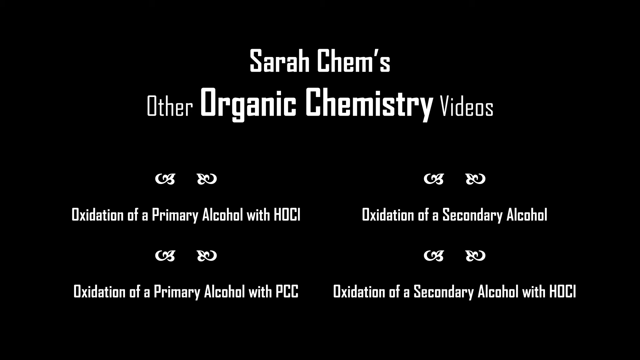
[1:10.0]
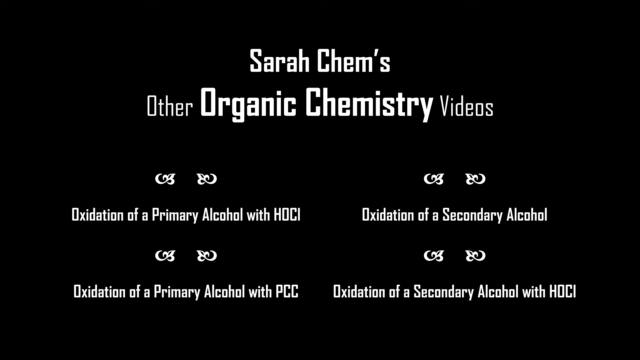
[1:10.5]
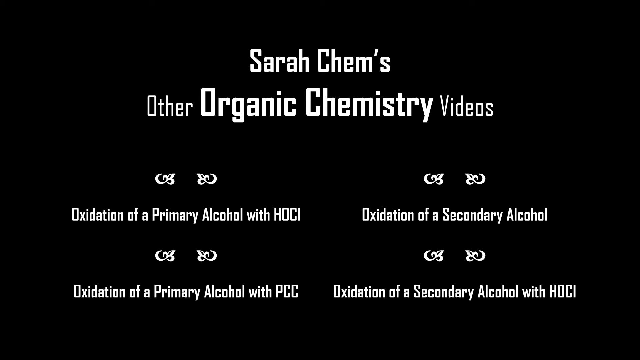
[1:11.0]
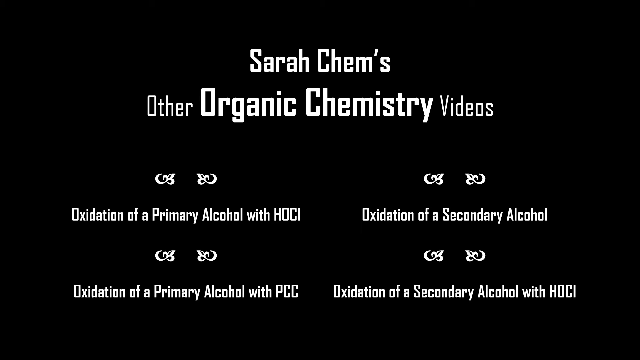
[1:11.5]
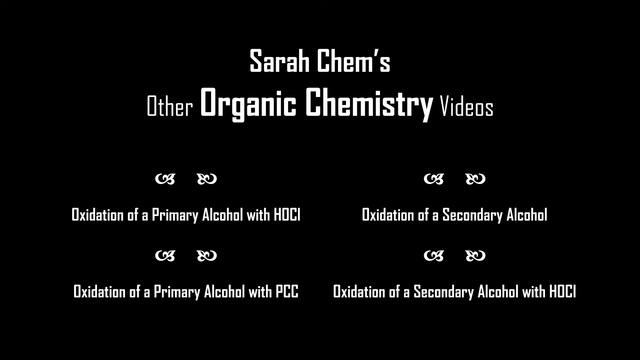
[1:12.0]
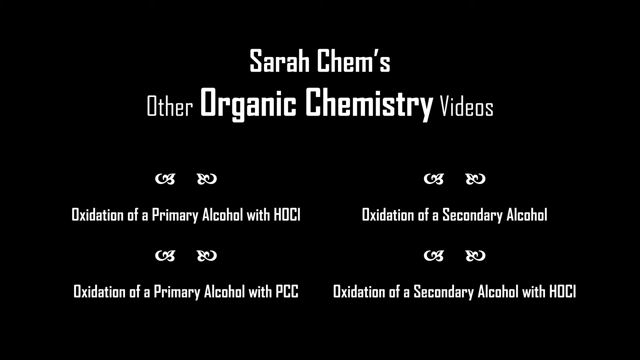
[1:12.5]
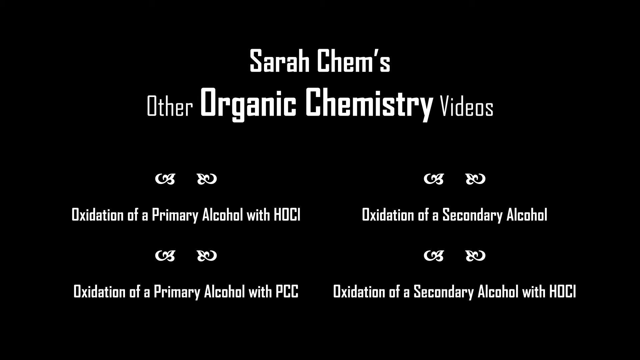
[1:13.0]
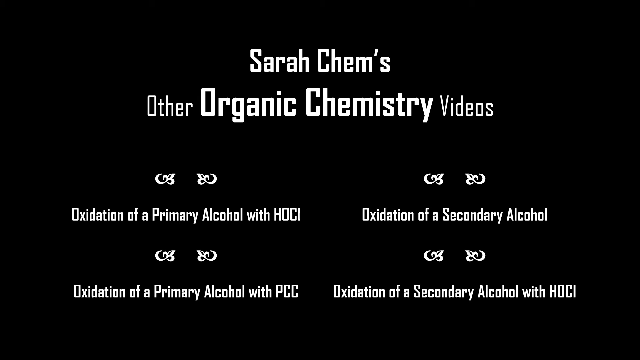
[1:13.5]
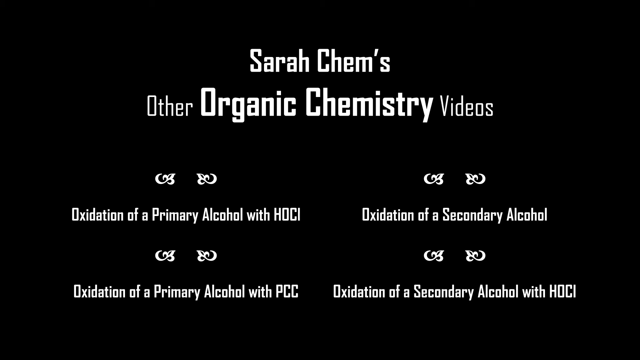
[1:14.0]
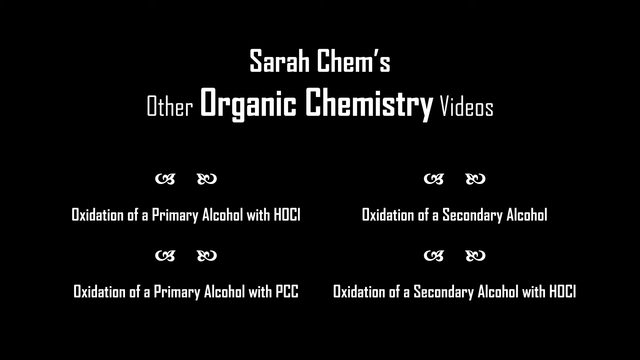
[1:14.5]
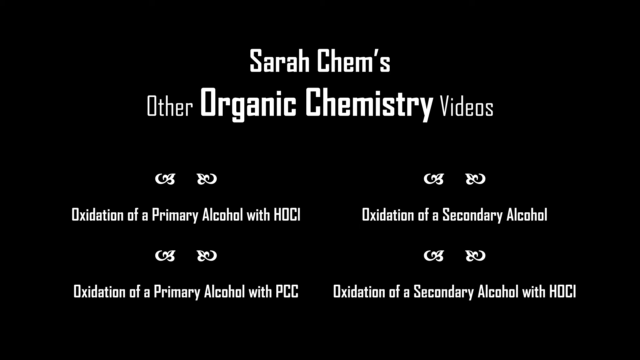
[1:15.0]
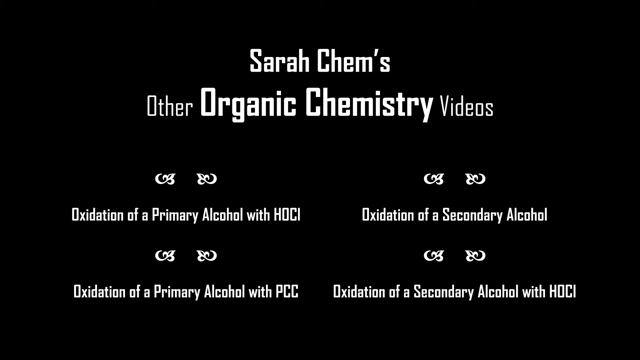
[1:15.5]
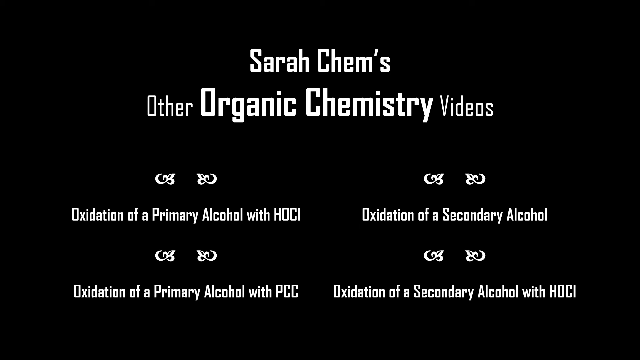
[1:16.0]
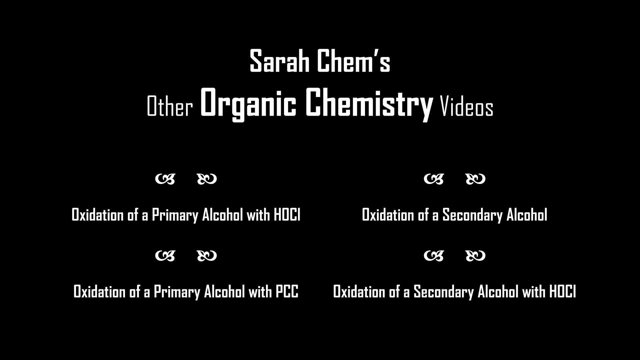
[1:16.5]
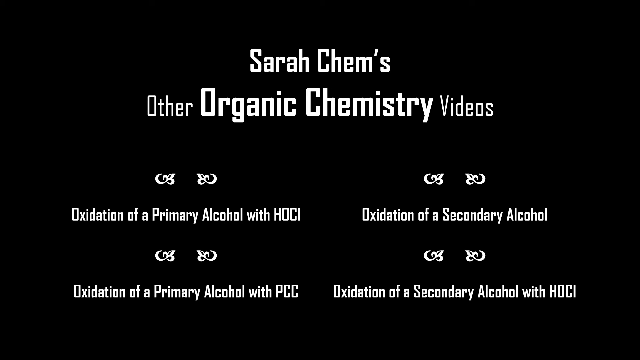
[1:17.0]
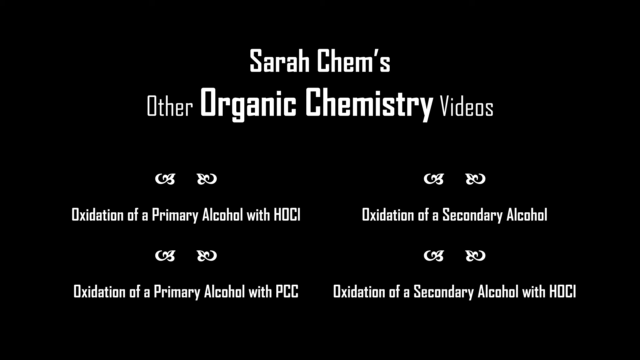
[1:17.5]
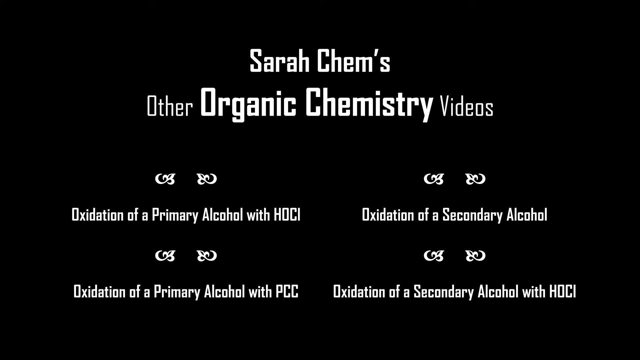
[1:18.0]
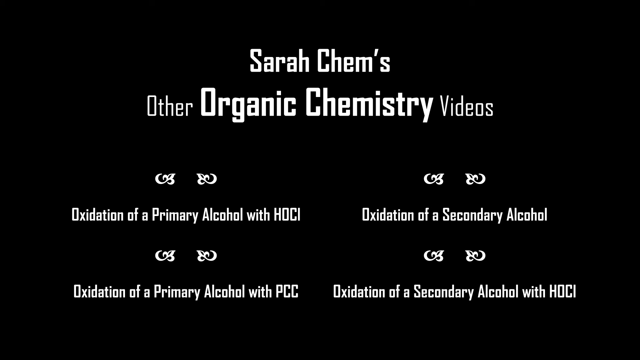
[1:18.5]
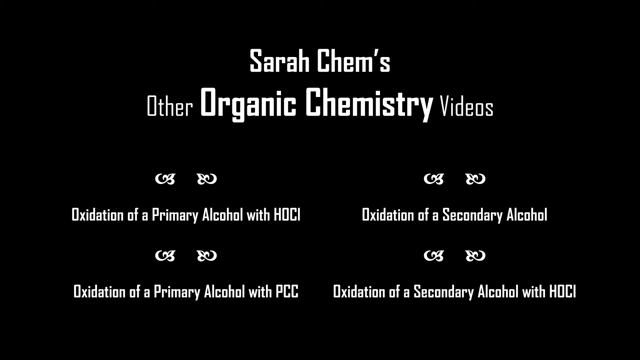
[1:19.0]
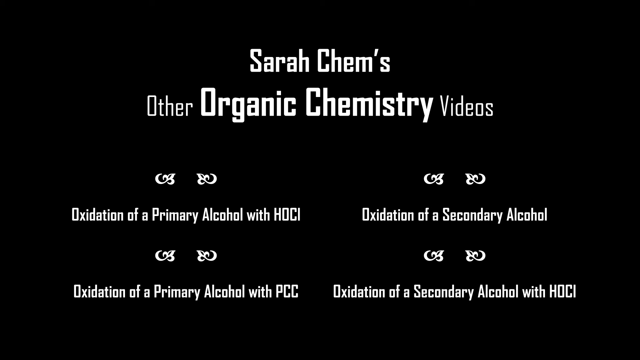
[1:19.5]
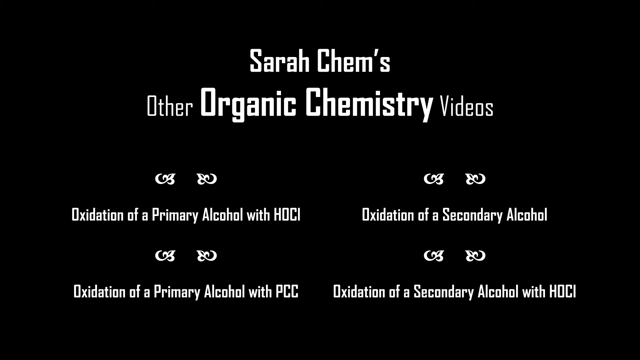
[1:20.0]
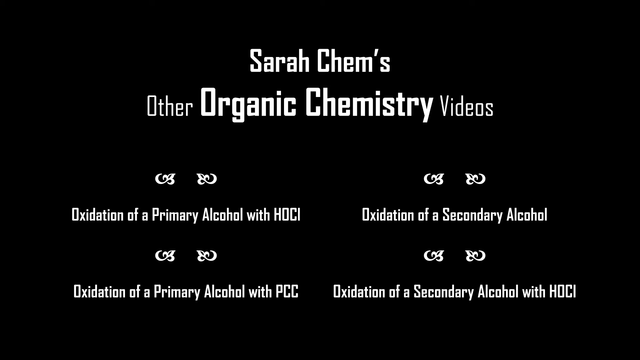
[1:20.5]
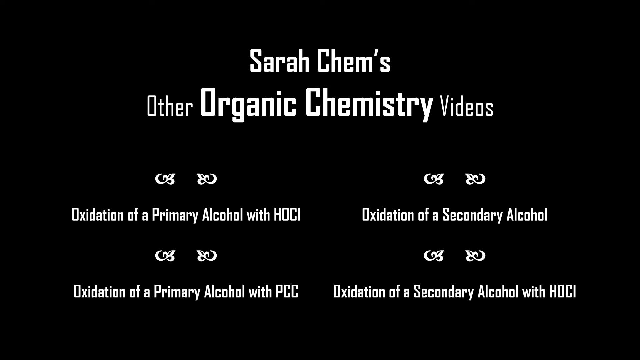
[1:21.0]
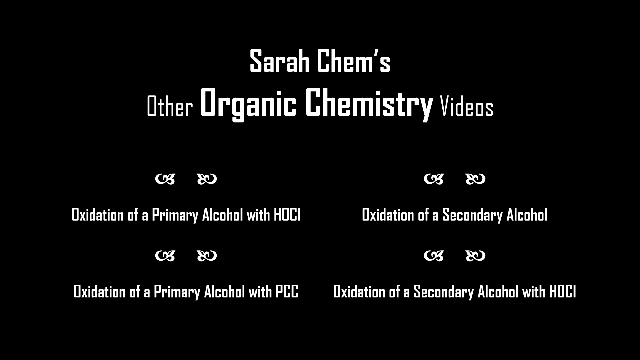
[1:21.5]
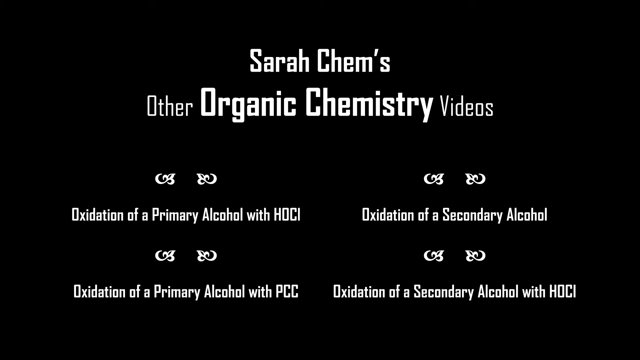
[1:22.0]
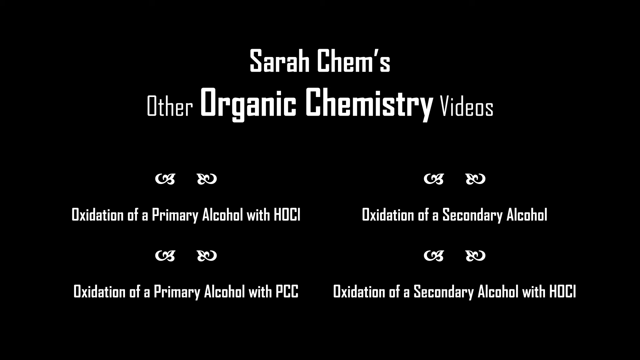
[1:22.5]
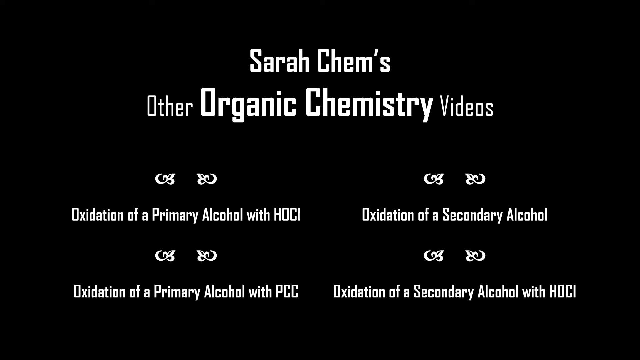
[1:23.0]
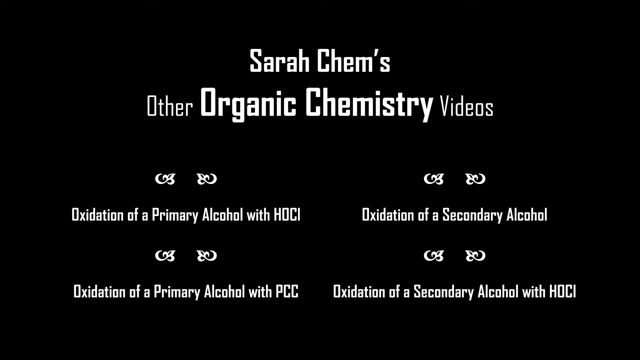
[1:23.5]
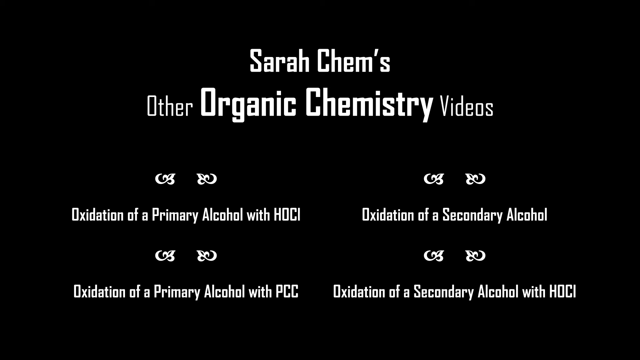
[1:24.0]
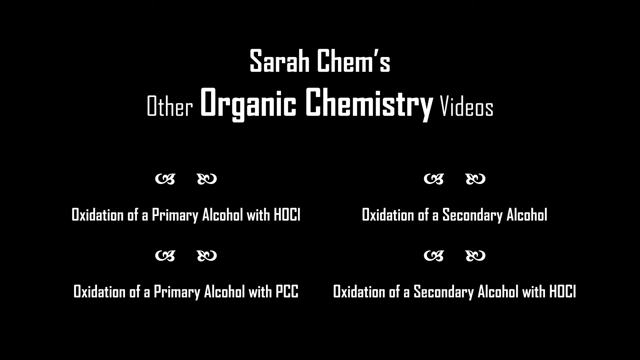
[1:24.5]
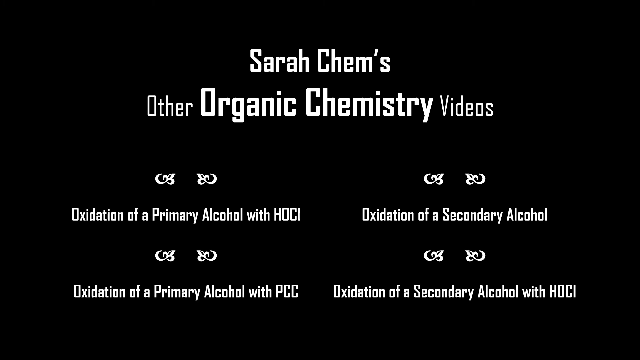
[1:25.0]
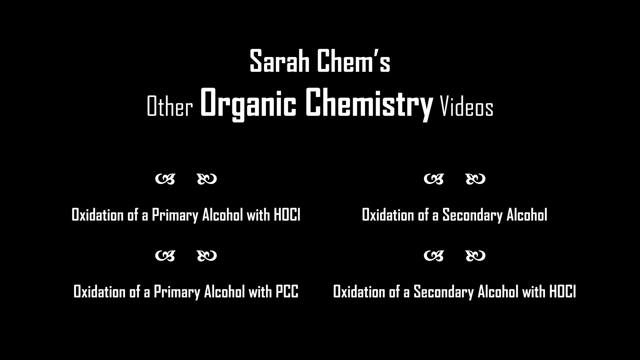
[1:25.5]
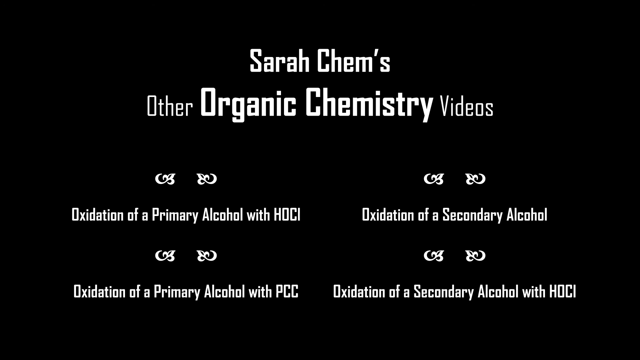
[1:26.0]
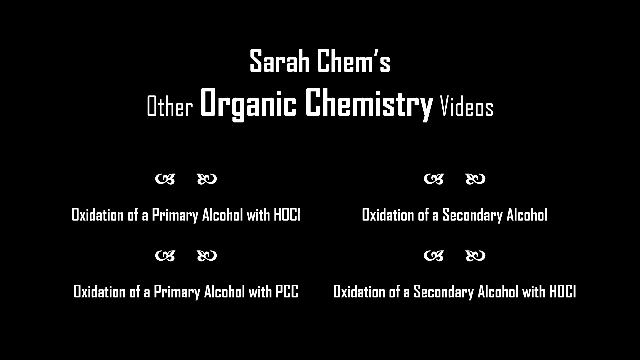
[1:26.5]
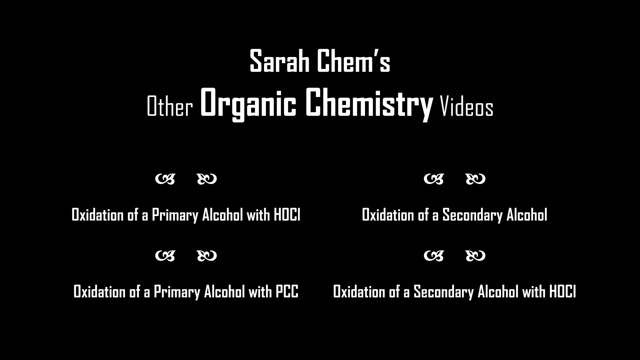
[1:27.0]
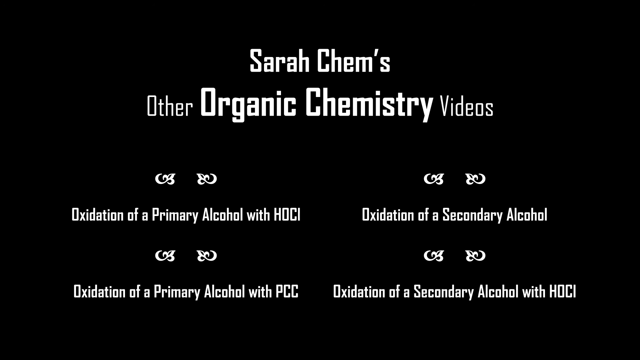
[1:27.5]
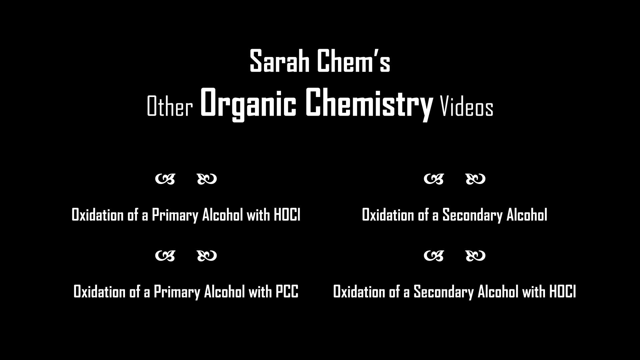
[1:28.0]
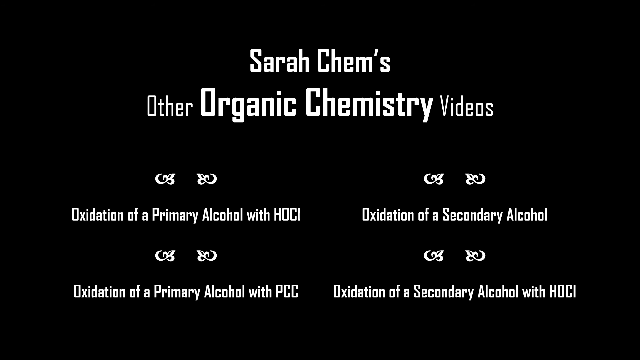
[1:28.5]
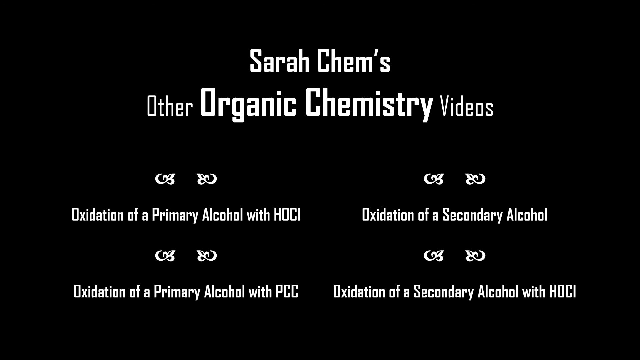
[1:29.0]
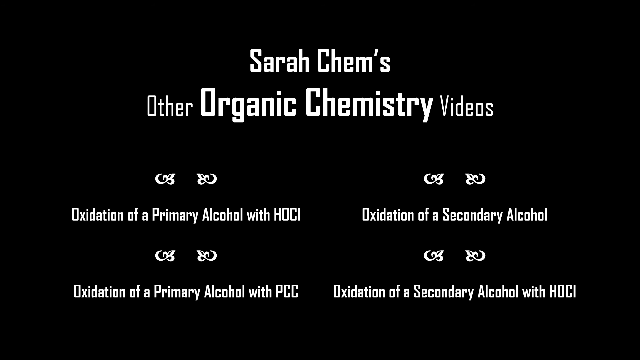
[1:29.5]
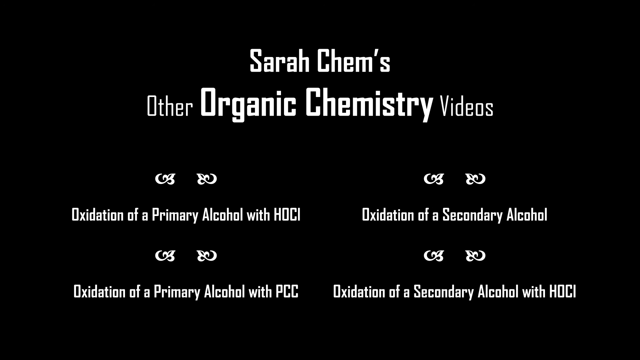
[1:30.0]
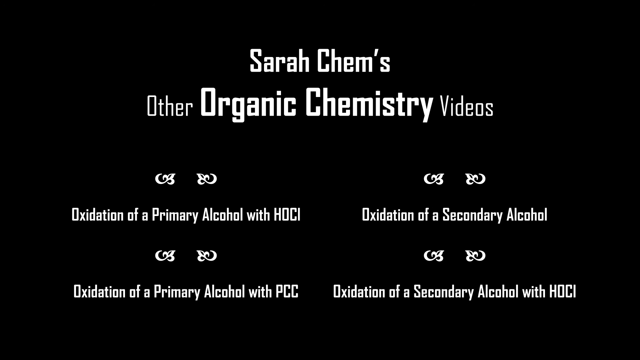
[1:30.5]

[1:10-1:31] The ending screen shows SARACHEM's other organic chemistry videos, in what looks like white writing on a black background, including "oxidation of primary alcohol with PCC" and an oxidation of a secondary alcohol. Sara is not visible: no grey t-shirt, glasses or red hair, and no blackboard with the oxidation of alcohol or the examples. The video ends with SARACHEM signing out.